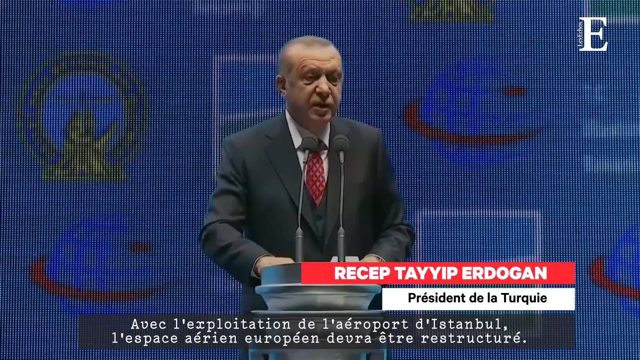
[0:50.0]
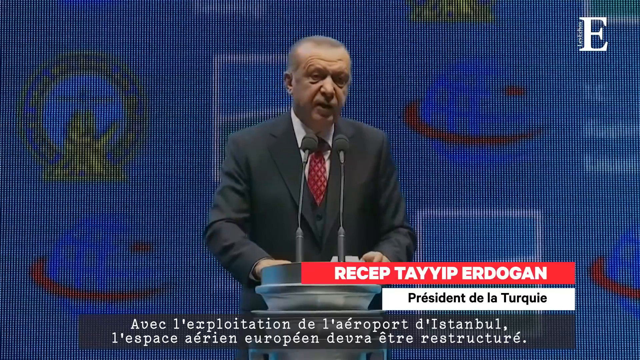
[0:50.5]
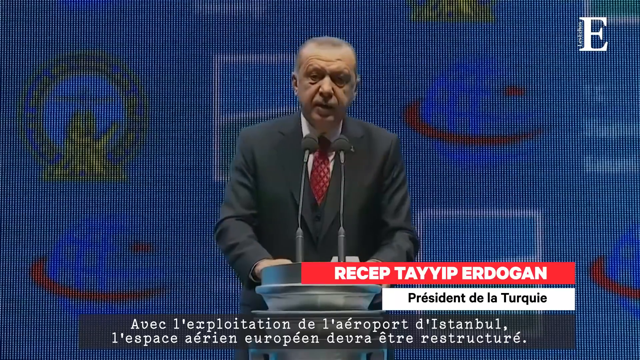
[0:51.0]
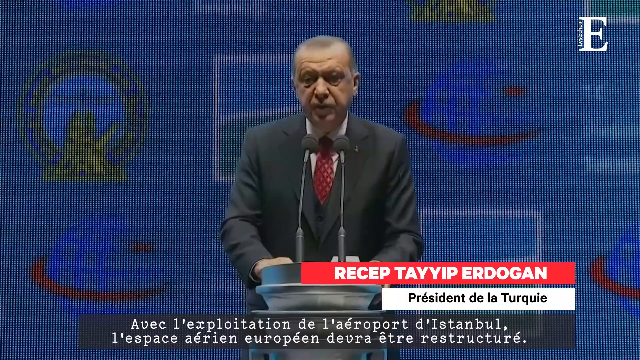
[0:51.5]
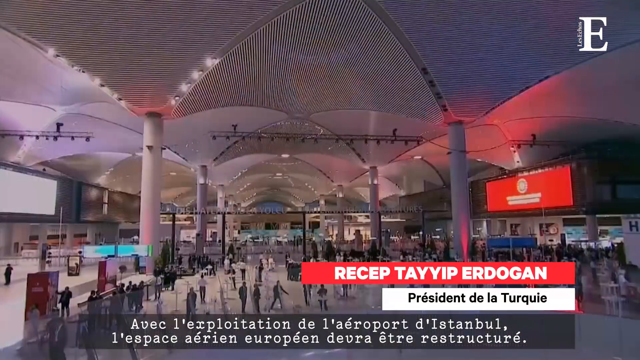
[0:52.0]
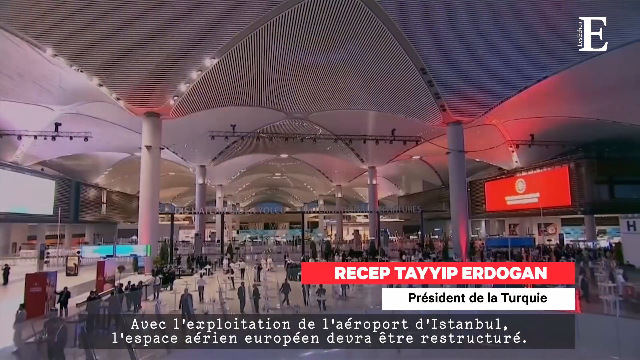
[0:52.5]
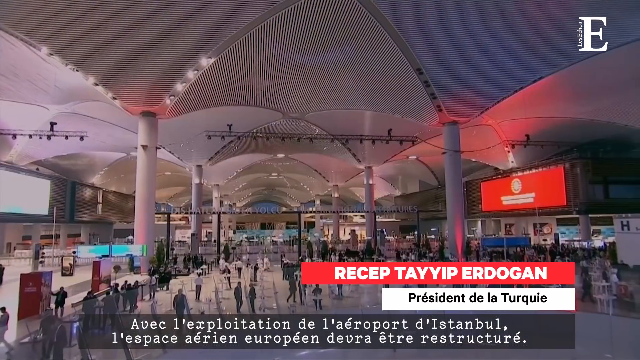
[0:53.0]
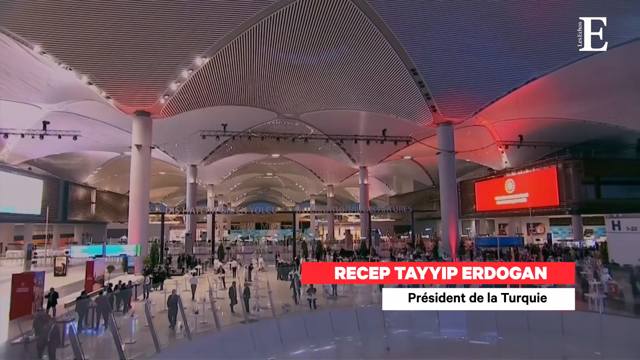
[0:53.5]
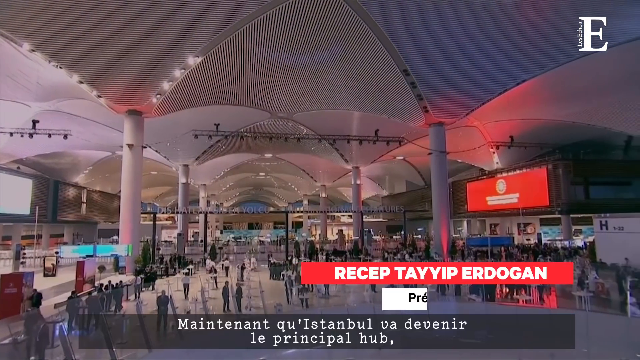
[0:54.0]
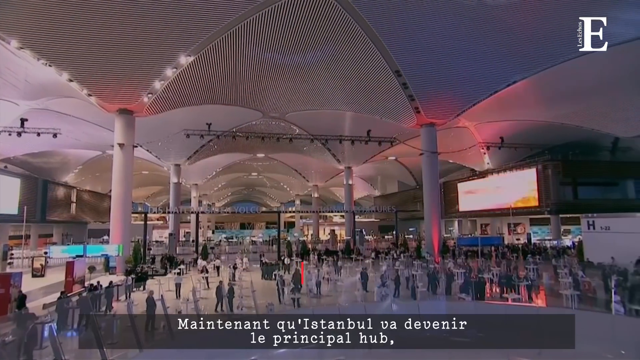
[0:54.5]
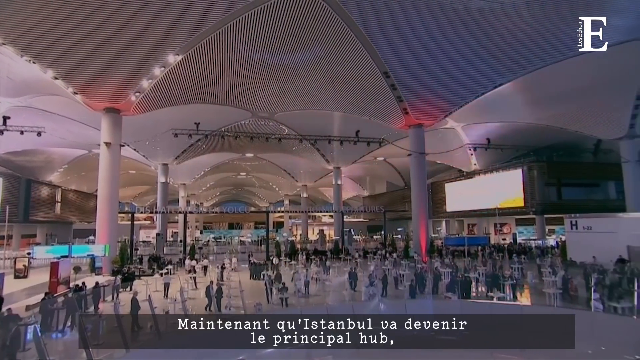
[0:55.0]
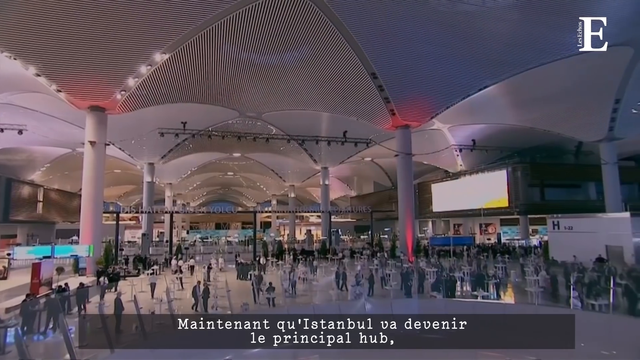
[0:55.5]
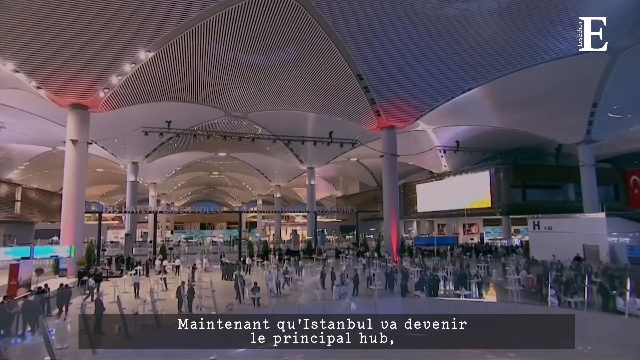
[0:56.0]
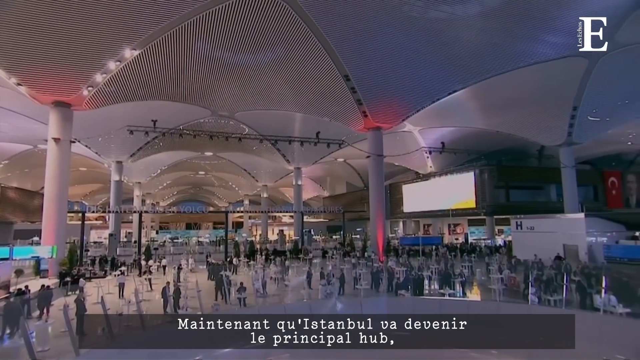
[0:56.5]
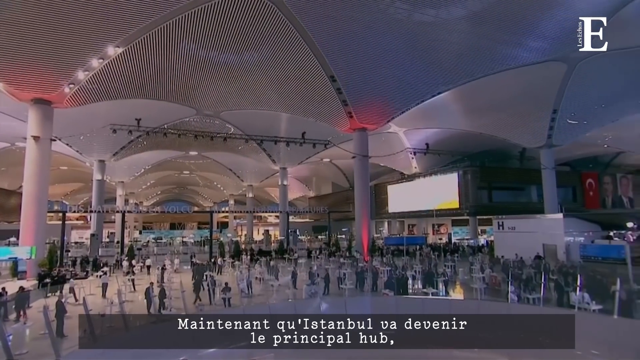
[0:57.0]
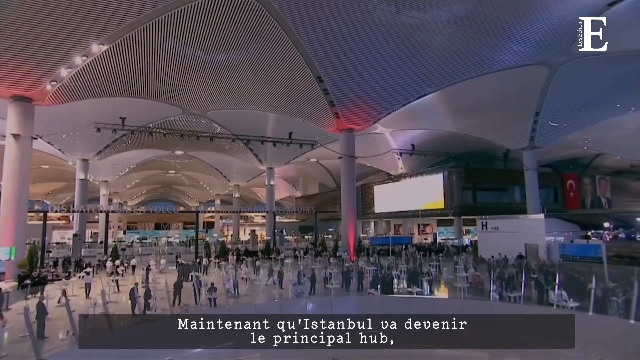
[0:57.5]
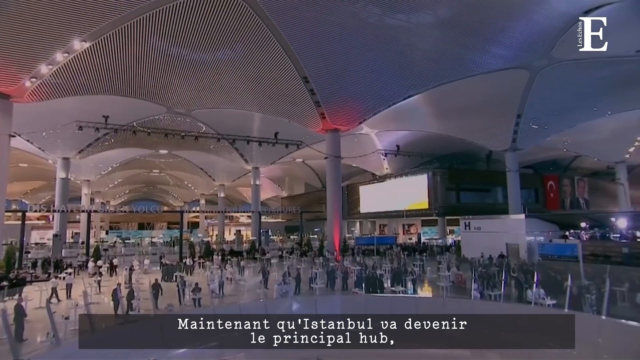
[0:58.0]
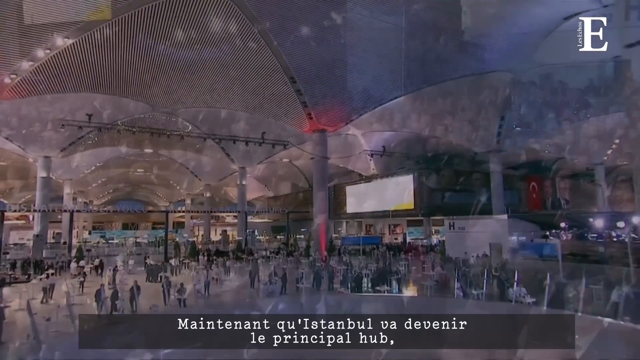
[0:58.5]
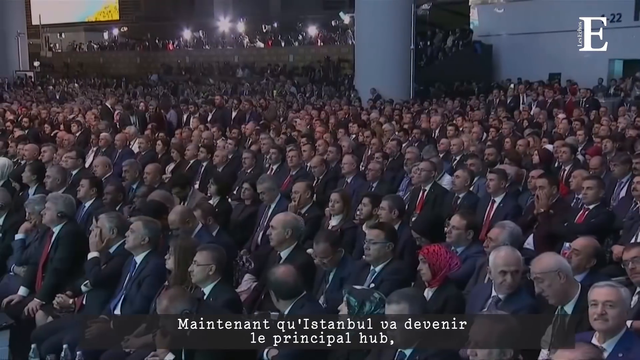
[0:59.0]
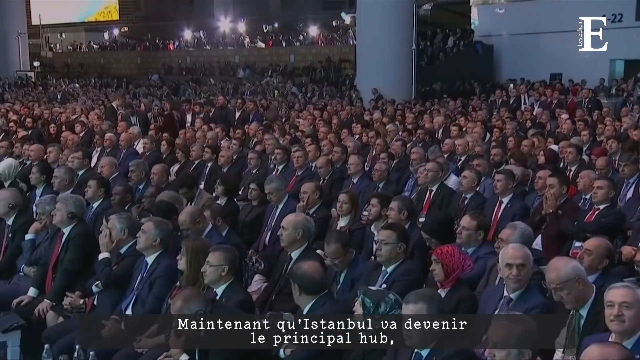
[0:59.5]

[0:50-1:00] The man talks at the podium with two mics in front of him. The interior of the airport has high vaulted ceilings that look sort of Moroccan in design, with pillars throughout the building. The vaulted ceiling, the pillars and the floor are all white, and red colored lights shine on the pillars; the space is kind of big and fancy and looks like it is somewhere in the Middle East. People walk around, but they don't appear to be travelers; they seem to be there just to look at the place. There is a very large audience. Many people wear robes and some of the women wear headscarves. The building looks like it might still be under construction or just finished, with people apparently there for the ceremony and looking around, and nobody appears to be traveling.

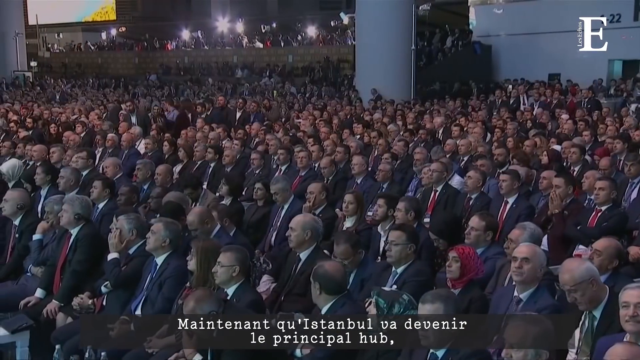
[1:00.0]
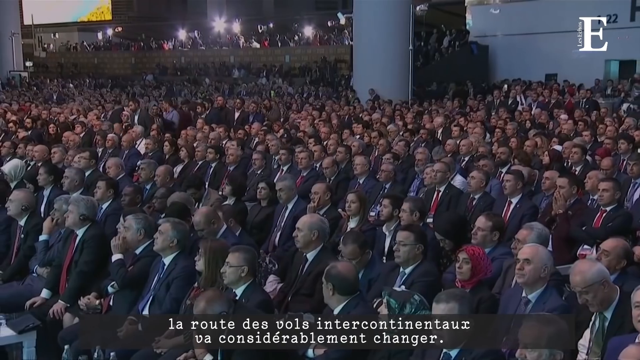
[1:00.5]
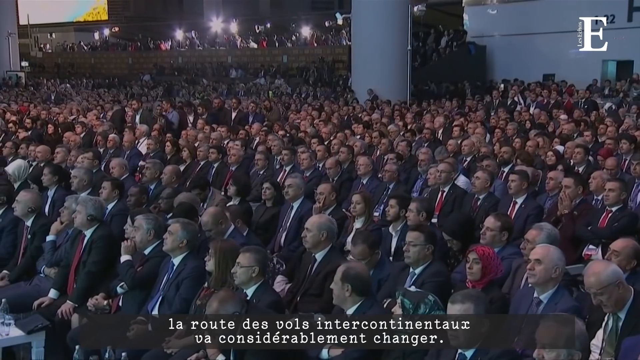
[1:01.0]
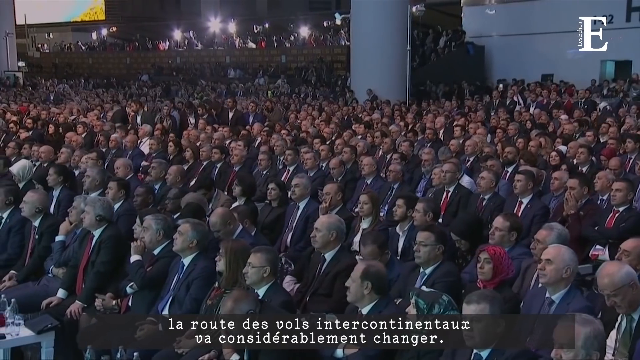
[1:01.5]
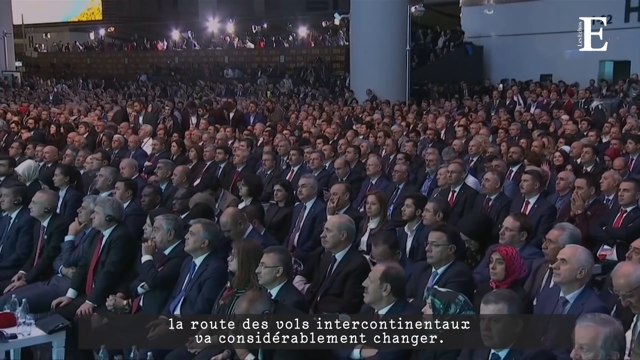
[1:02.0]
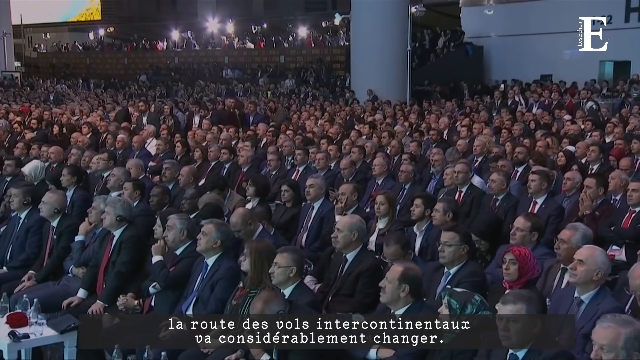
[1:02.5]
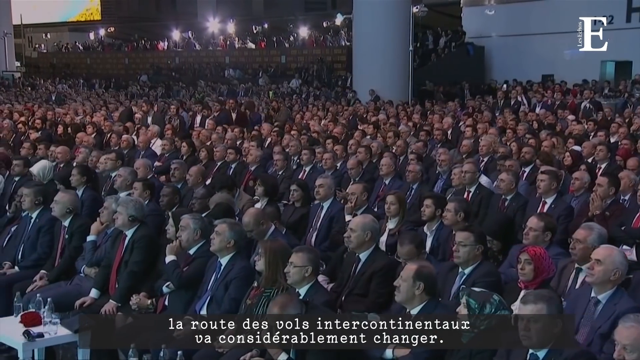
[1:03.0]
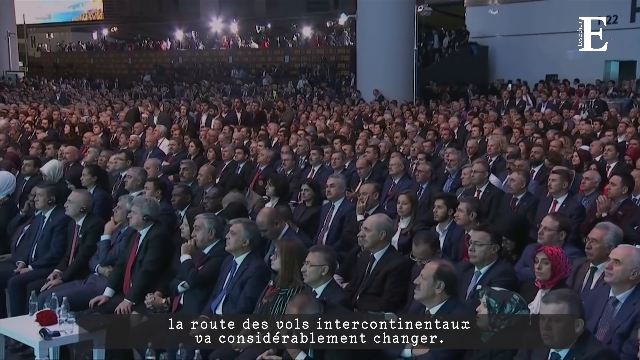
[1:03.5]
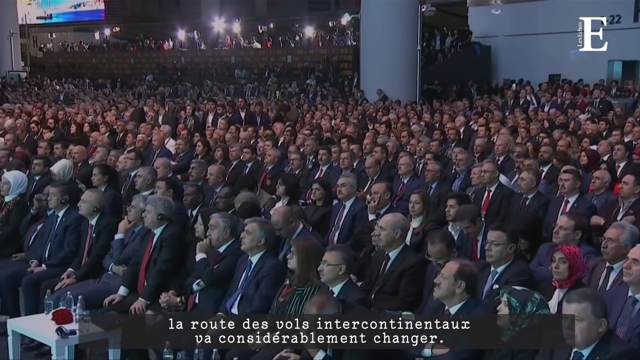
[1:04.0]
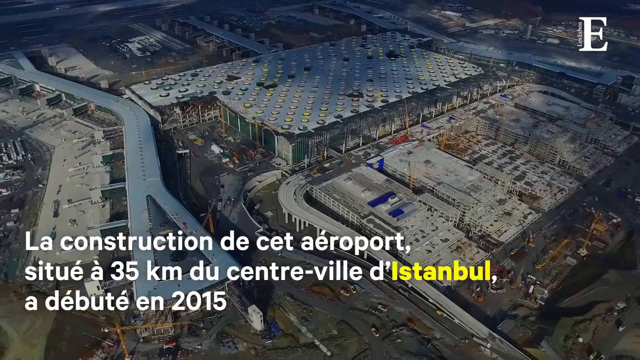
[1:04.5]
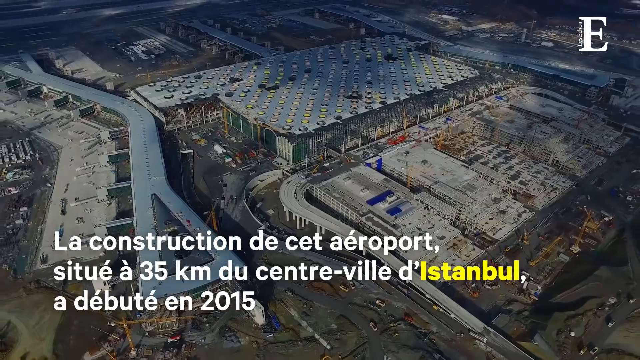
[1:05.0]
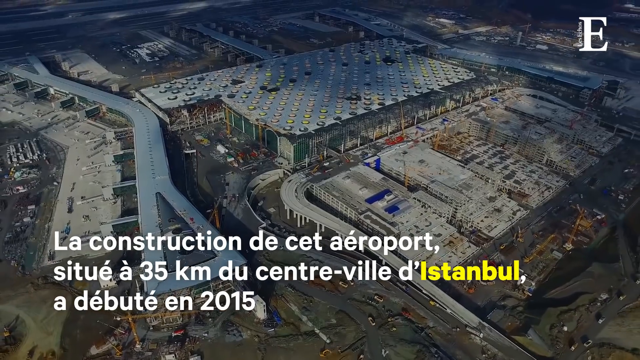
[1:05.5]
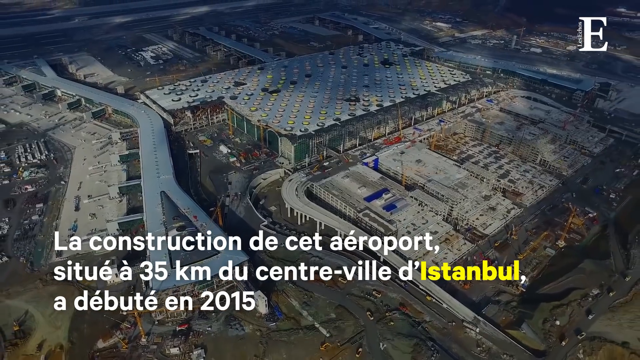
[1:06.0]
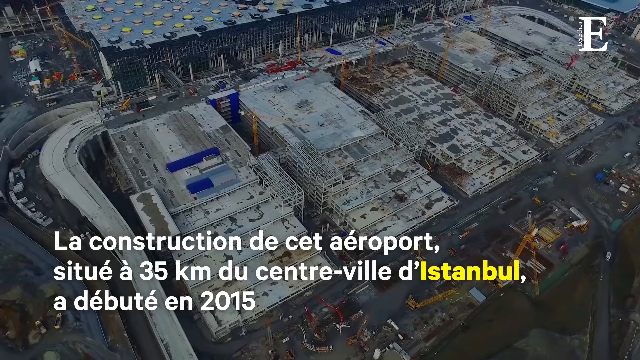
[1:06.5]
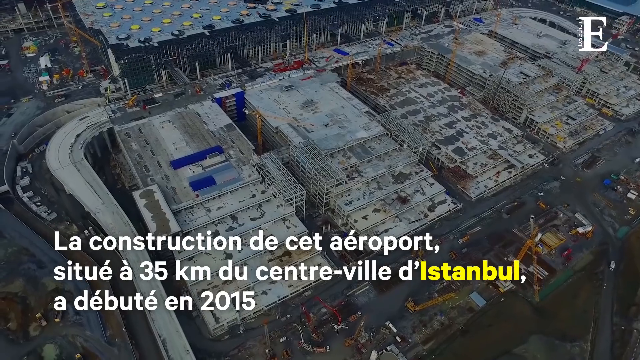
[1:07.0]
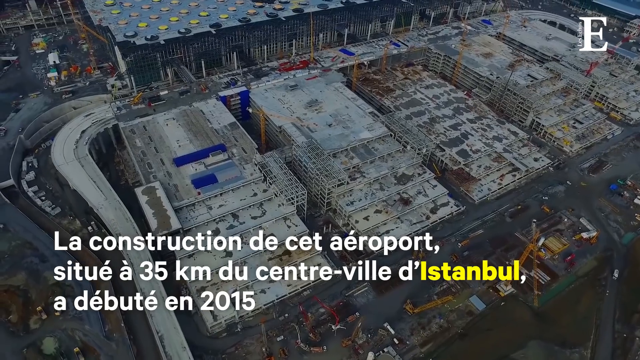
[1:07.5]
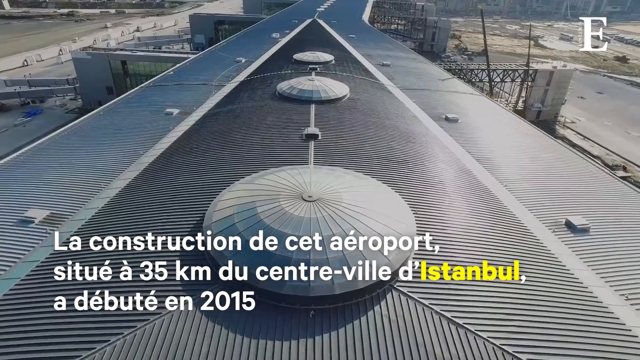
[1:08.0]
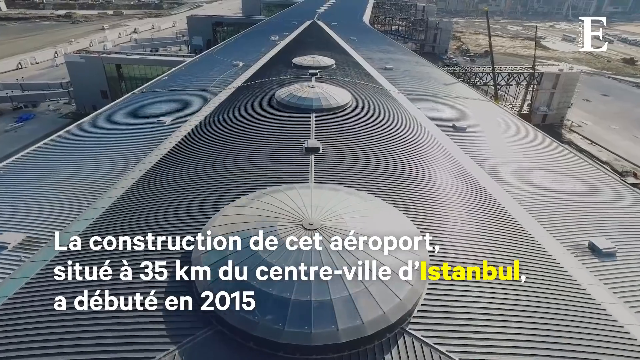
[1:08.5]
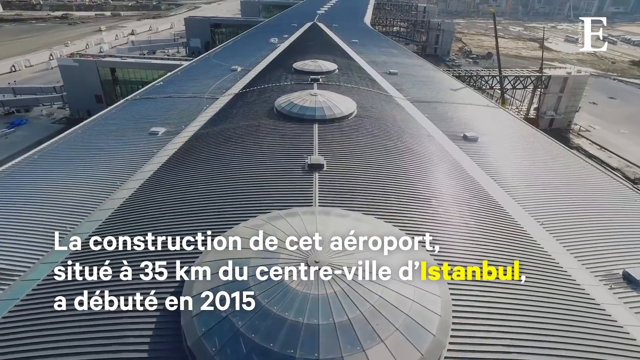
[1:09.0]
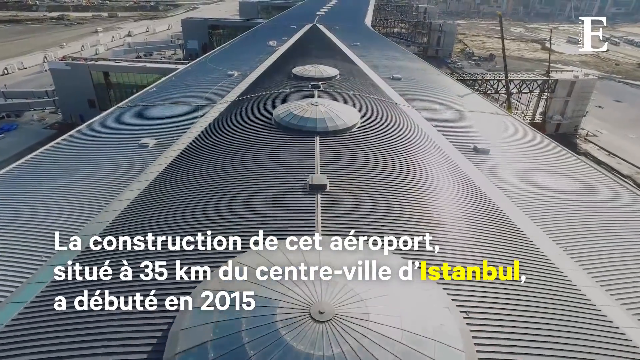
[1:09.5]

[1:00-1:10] A shot shows the rather large audience, in which all the men wear dark suits. There are women in the audience, some wearing headscarves and some not. Everybody looks very serious and seems very focused on the man at the podium. The press appears to be at the gathering, with lights in the background. The video then shows different stages and levels of the construction of the building, which is in Istanbul. On-screen text, apparently in French, seems to say that construction of the airport, about 35 kilometers from possibly the center of Istanbul, started in 2015.